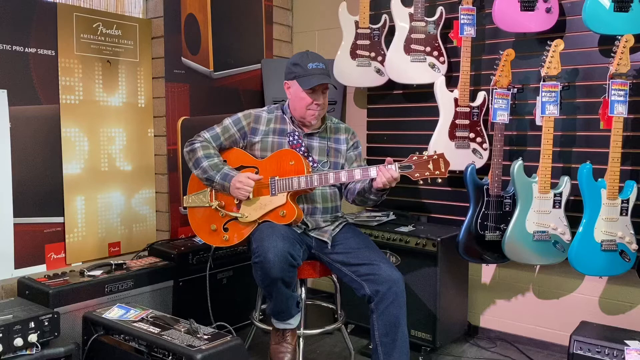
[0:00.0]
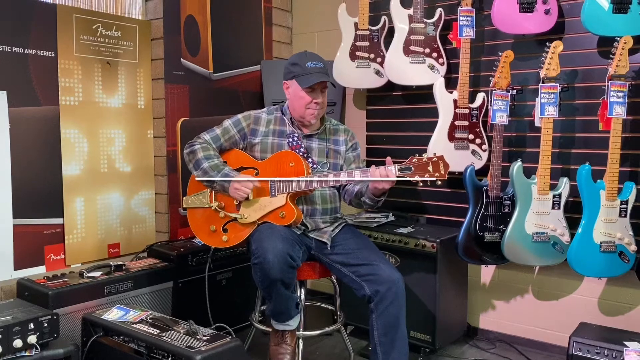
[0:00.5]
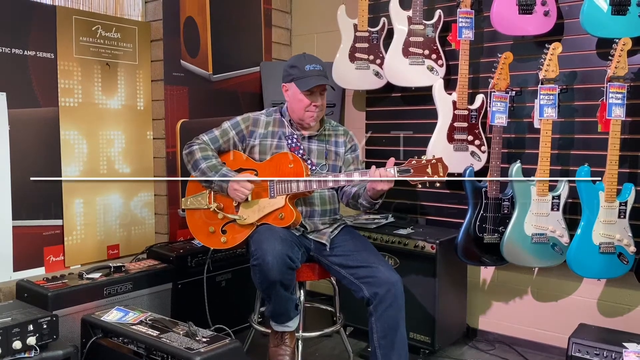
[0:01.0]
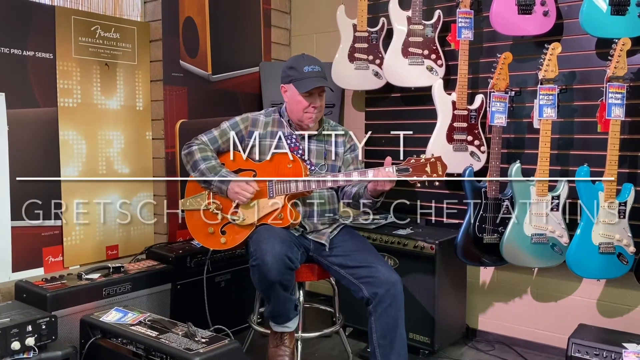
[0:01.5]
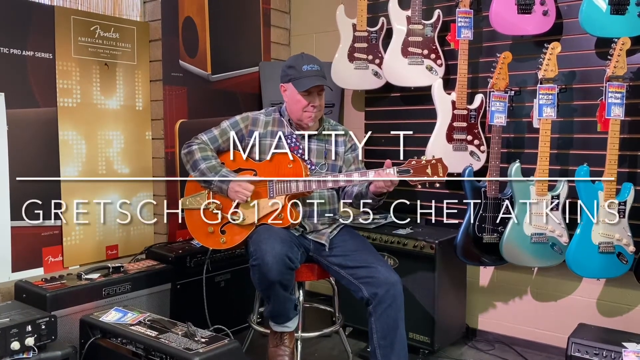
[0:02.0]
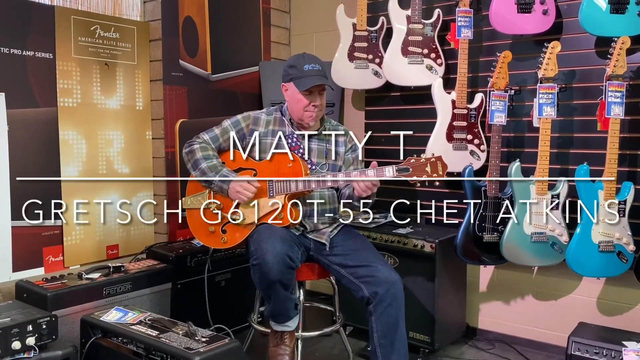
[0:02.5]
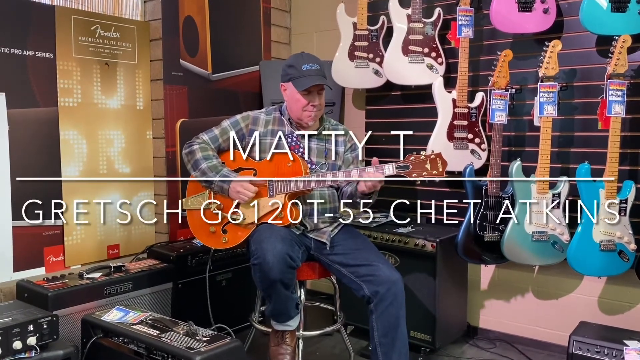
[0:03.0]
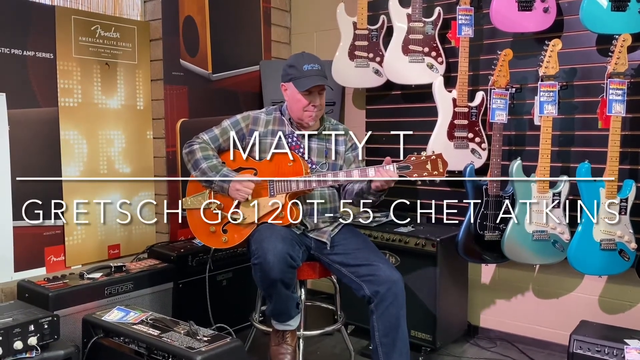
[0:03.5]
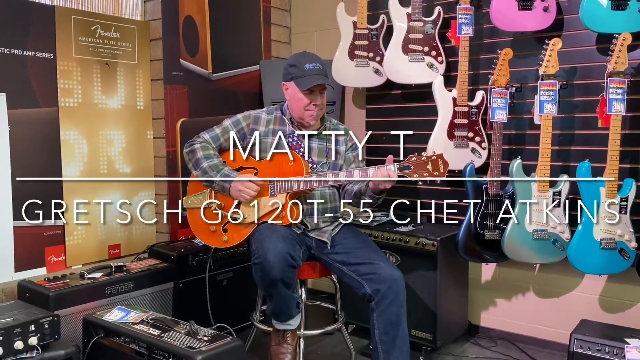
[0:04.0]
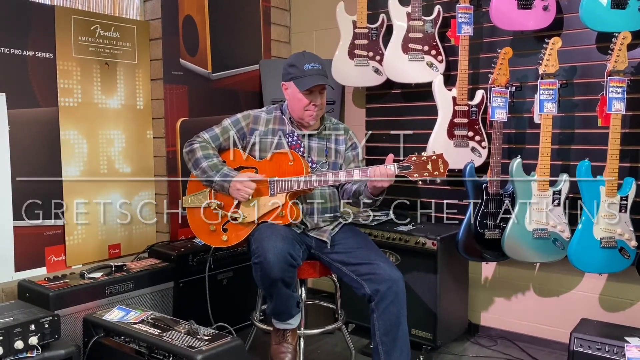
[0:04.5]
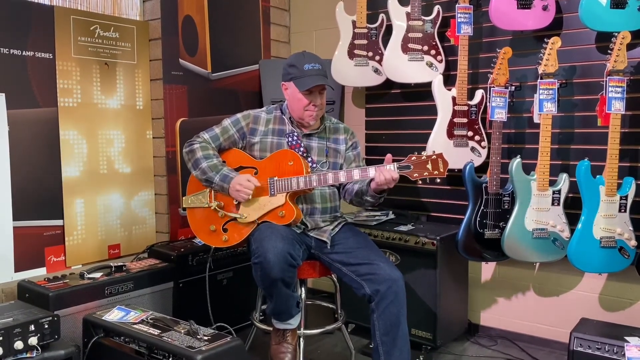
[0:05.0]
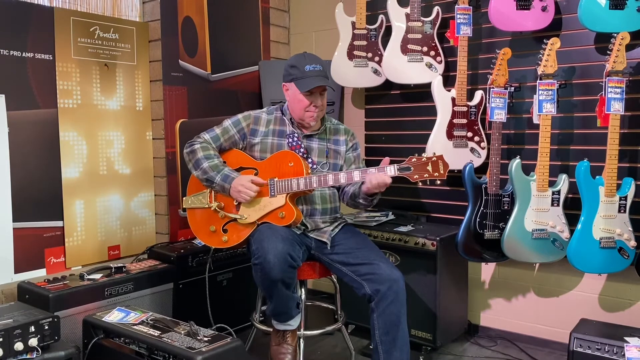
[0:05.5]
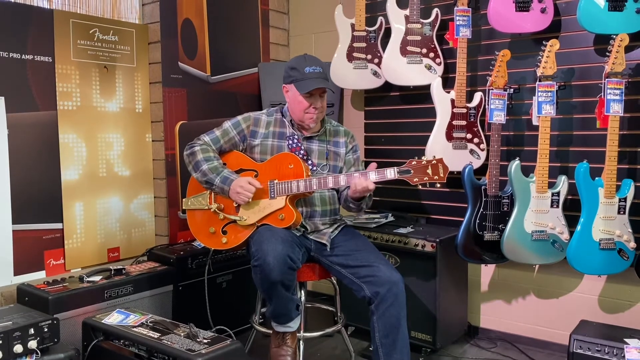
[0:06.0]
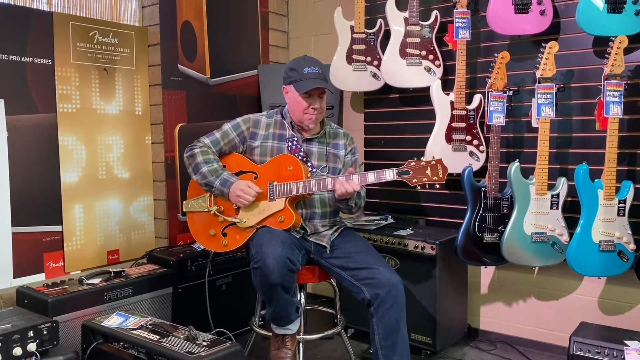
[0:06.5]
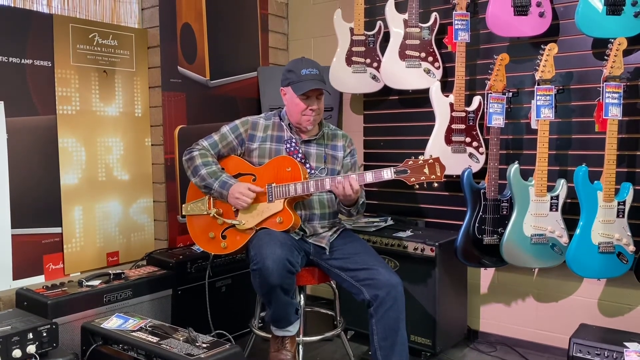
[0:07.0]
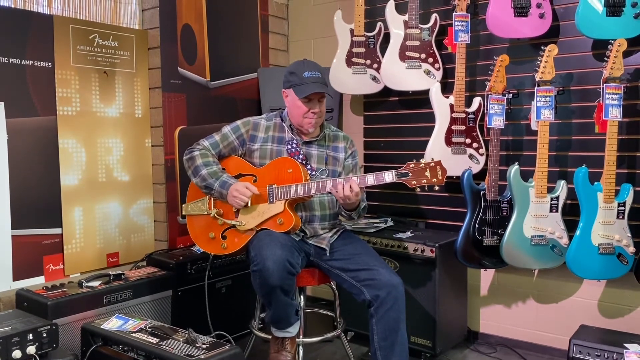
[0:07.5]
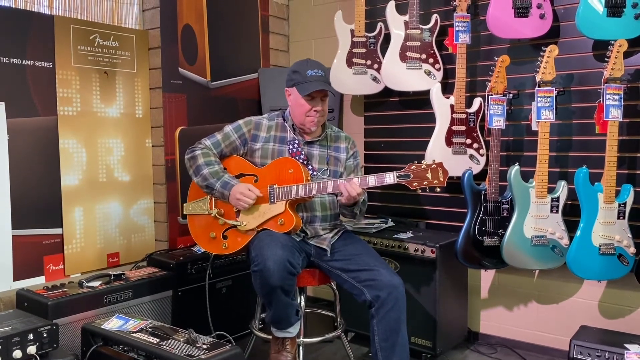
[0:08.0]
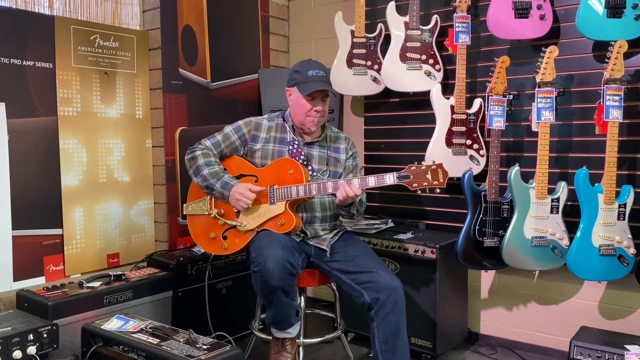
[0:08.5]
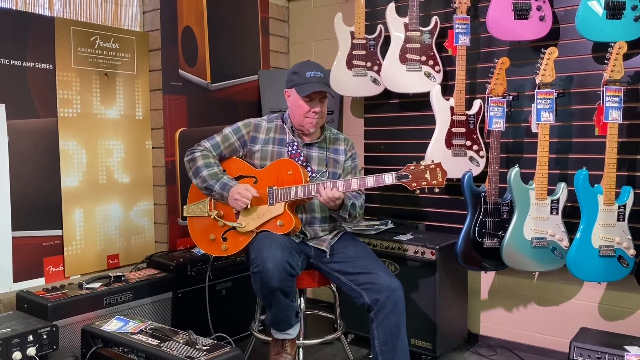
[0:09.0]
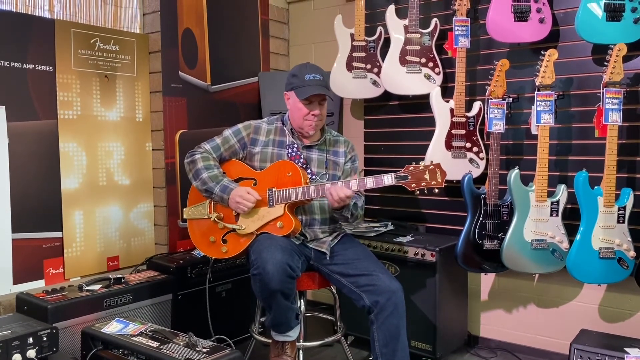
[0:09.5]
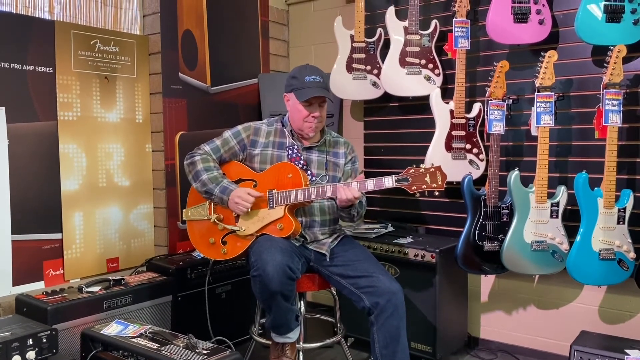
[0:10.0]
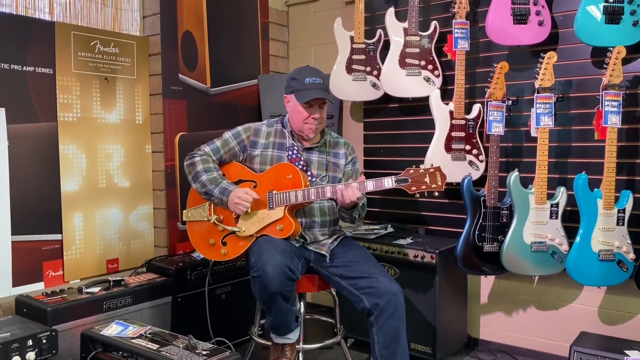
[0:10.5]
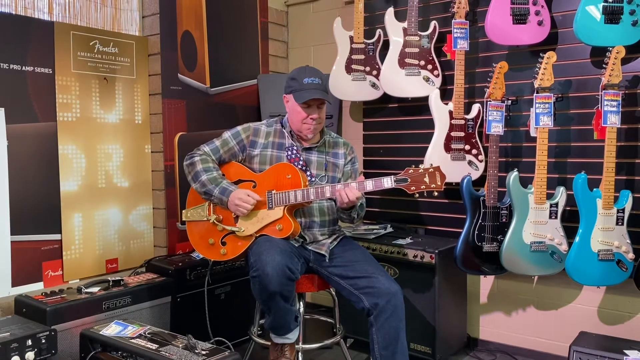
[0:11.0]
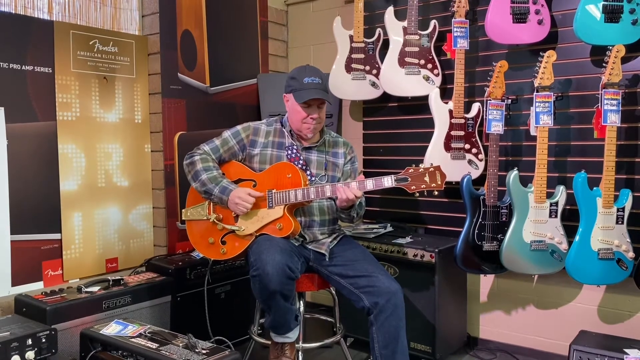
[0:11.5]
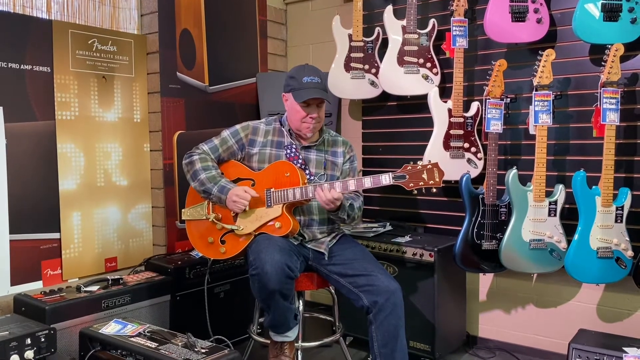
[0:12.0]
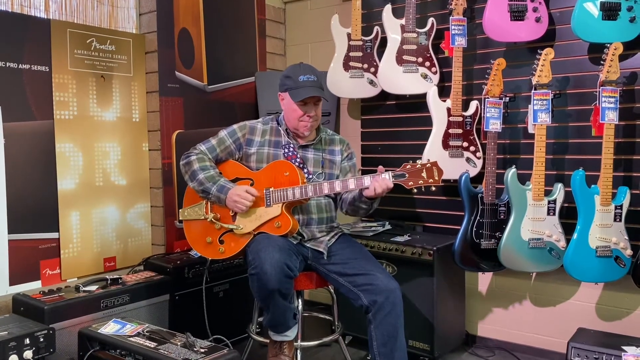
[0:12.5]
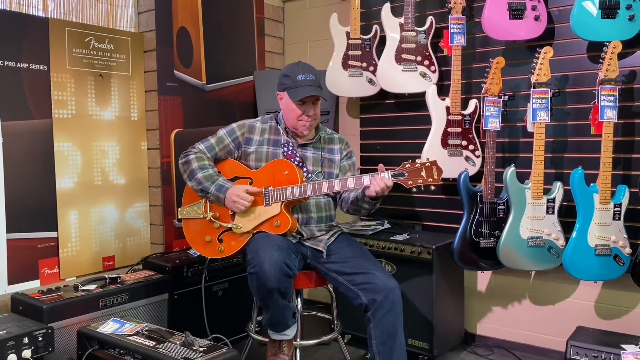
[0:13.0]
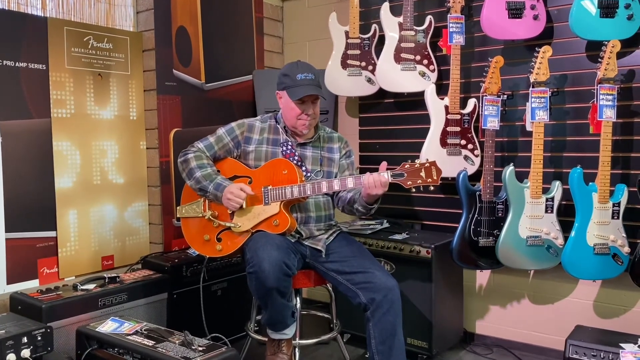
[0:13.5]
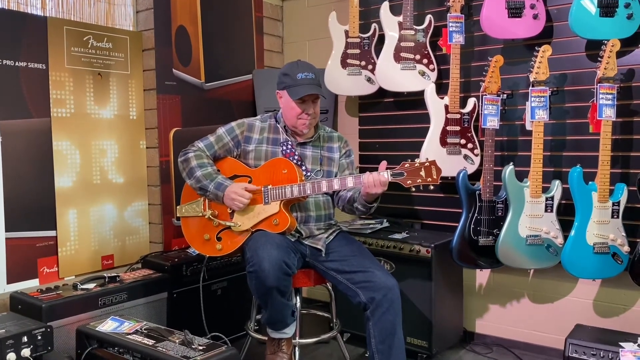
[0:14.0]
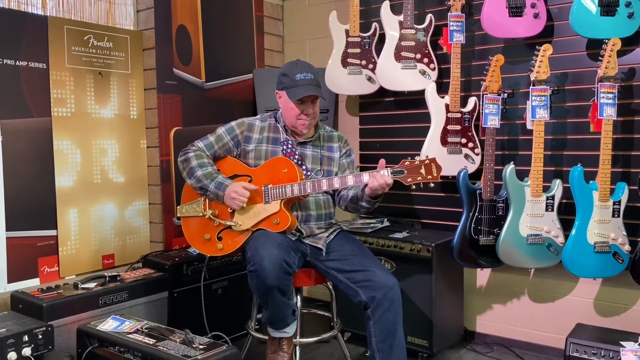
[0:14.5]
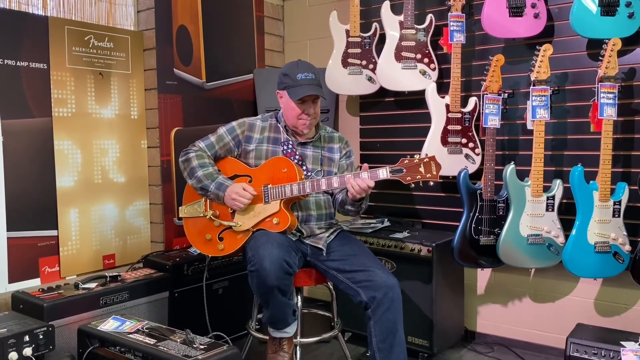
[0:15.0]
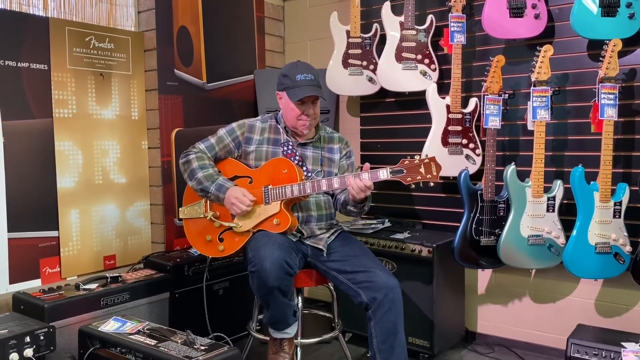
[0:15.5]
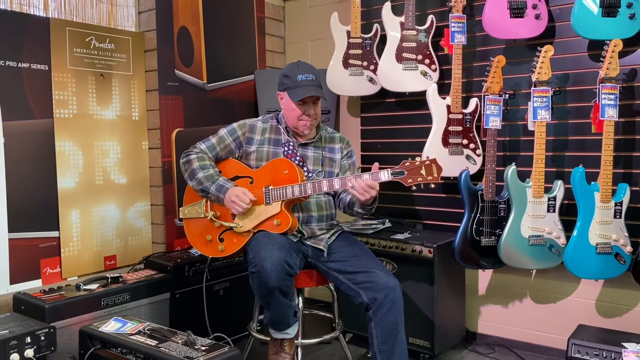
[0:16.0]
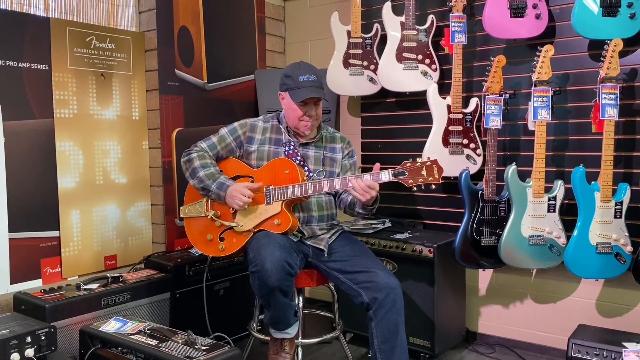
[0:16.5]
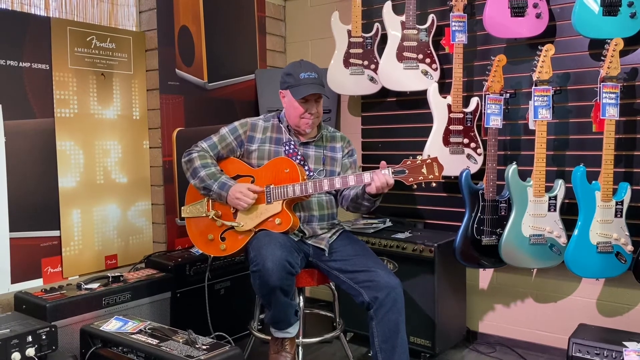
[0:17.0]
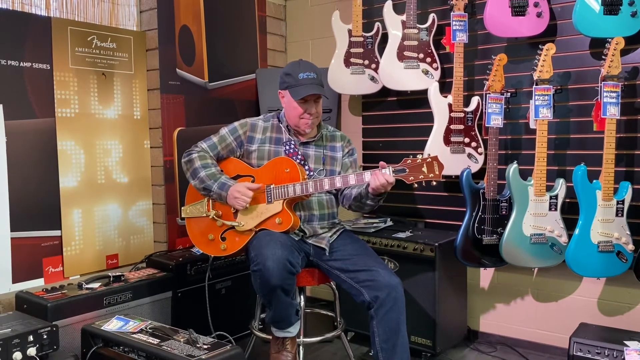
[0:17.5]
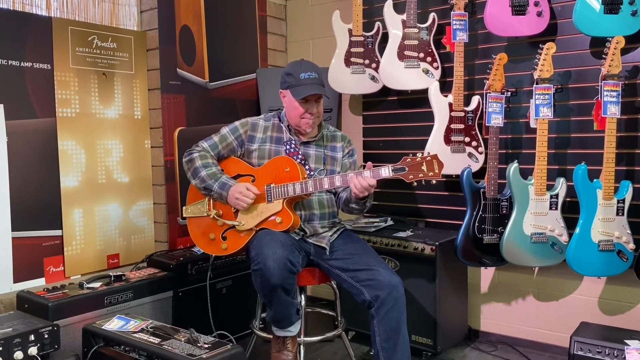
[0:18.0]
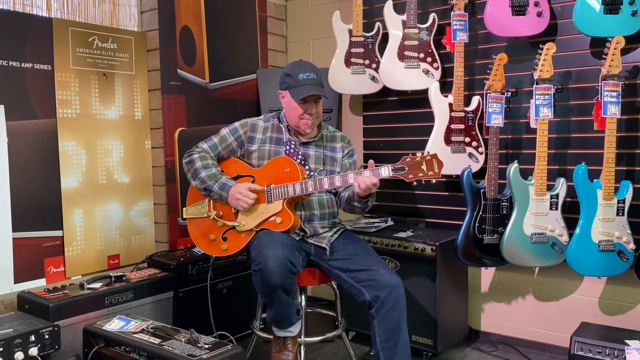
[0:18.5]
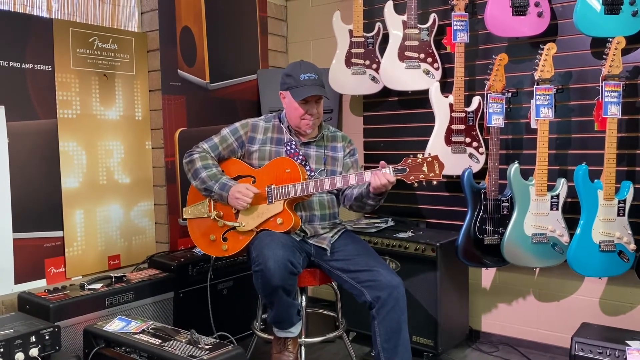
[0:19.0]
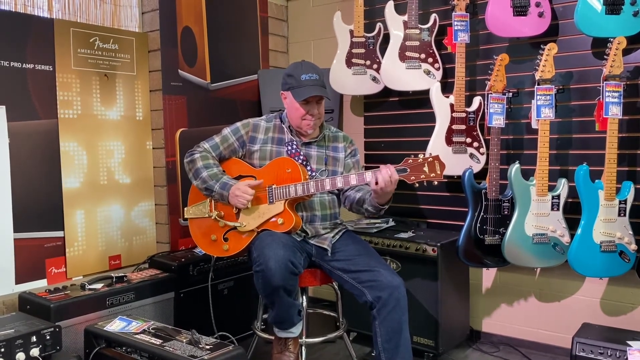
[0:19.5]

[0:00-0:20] An older man plays his guitar while sitting on a seat that looks like a stool: a red stool with metal legs at the bottom. He appears to be in some sort of guitar shop or music shop, with a bunch of guitars on the back right wall and some other music equipment on the bottom left. He strums the strings with his right hand and thumb while his left hand moves back and forth over different parts of the guitar. At the beginning, text at the top reads "Matty T", apparently his name, and text at the bottom names "Gretsch" and "Chet Atkins" along with a model number, possibly the model of the guitar.